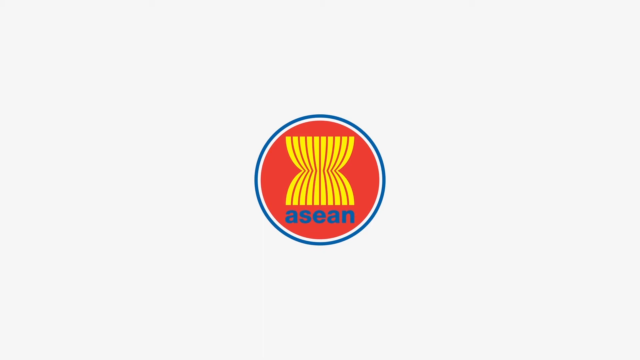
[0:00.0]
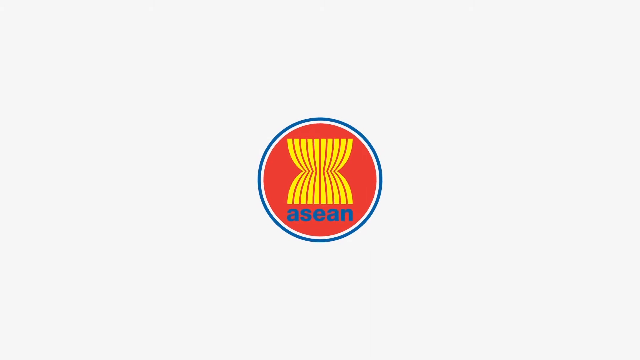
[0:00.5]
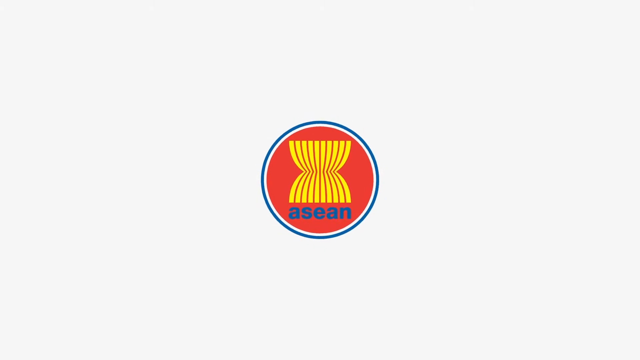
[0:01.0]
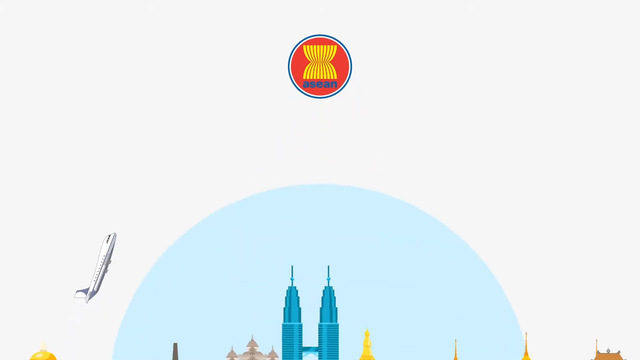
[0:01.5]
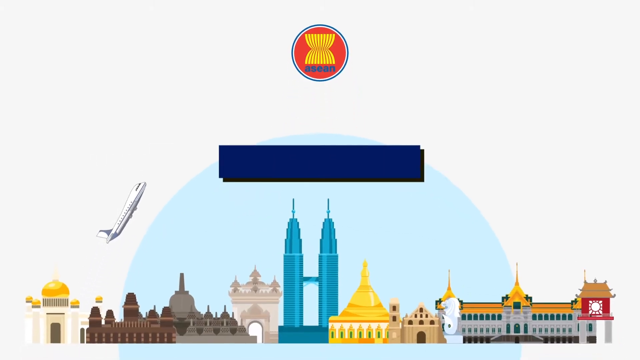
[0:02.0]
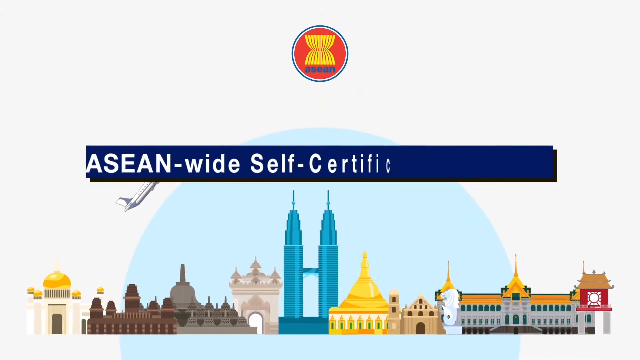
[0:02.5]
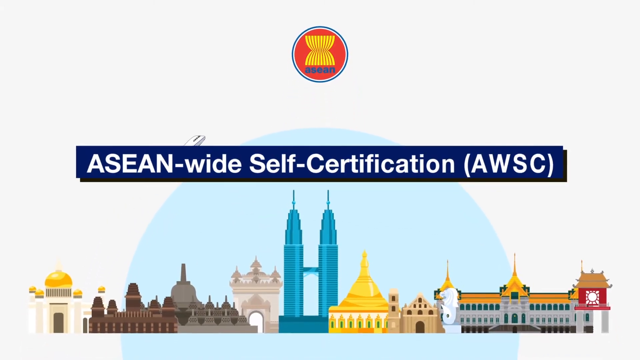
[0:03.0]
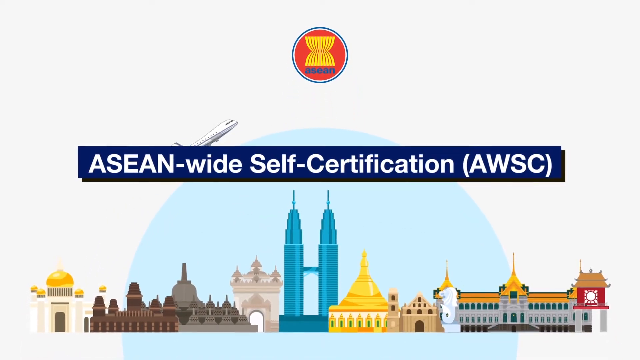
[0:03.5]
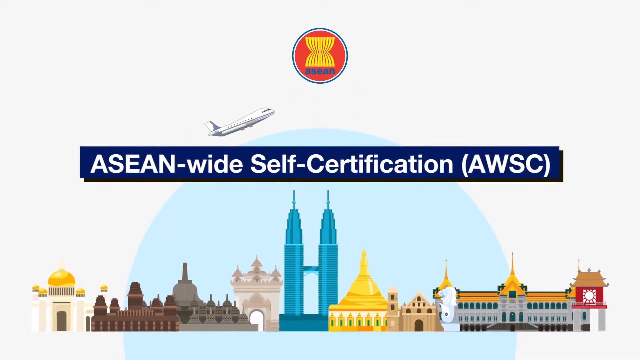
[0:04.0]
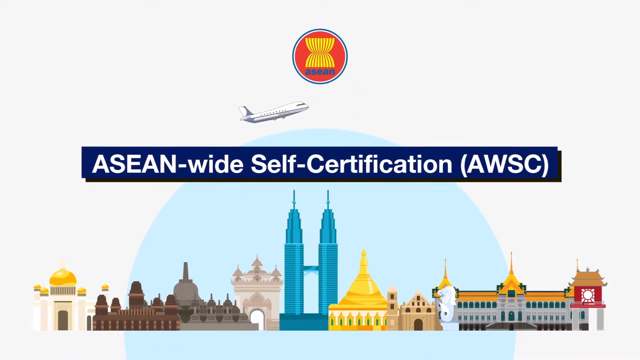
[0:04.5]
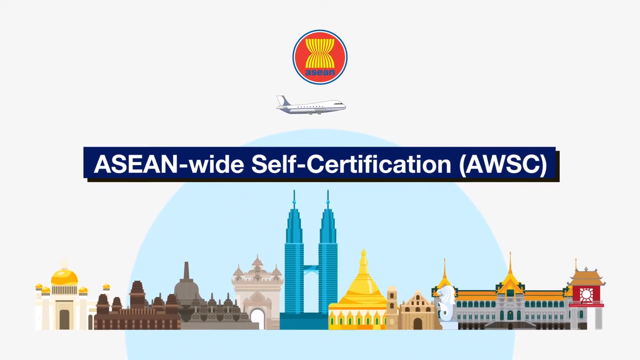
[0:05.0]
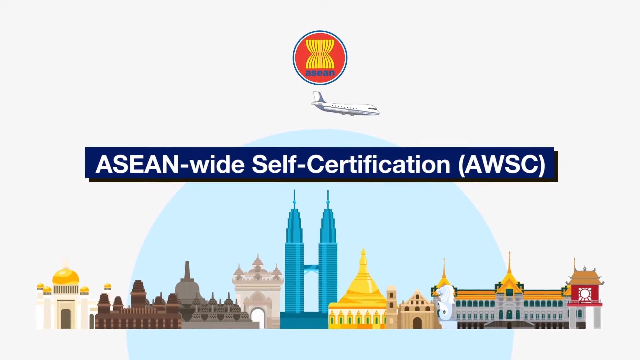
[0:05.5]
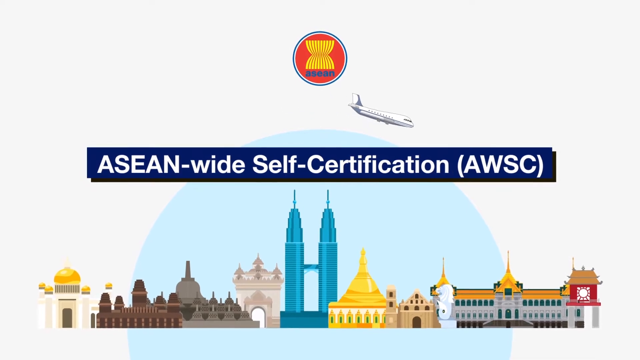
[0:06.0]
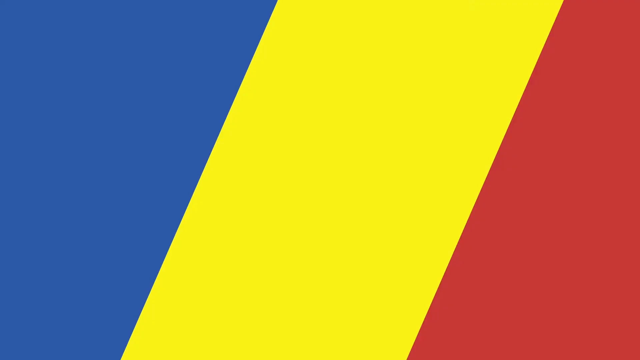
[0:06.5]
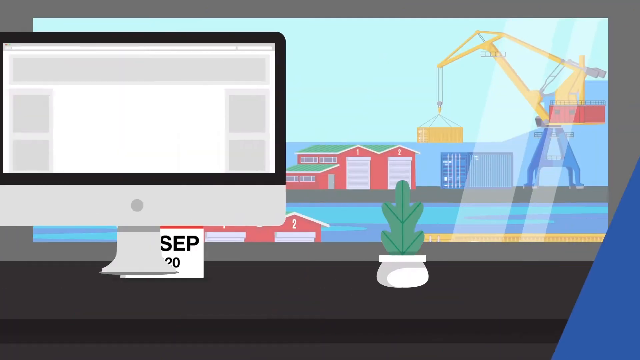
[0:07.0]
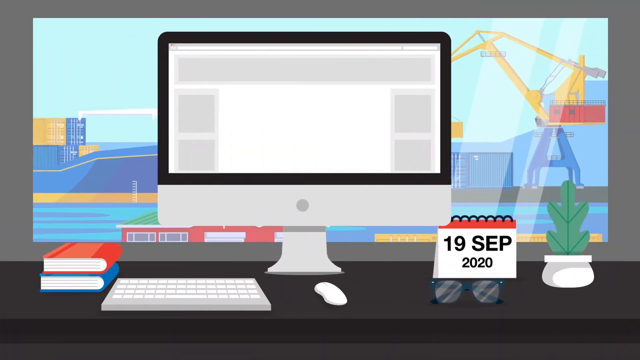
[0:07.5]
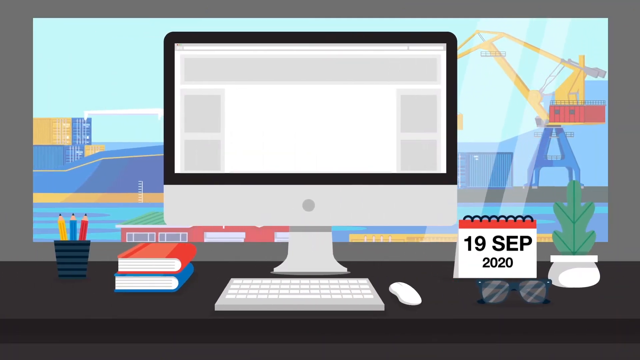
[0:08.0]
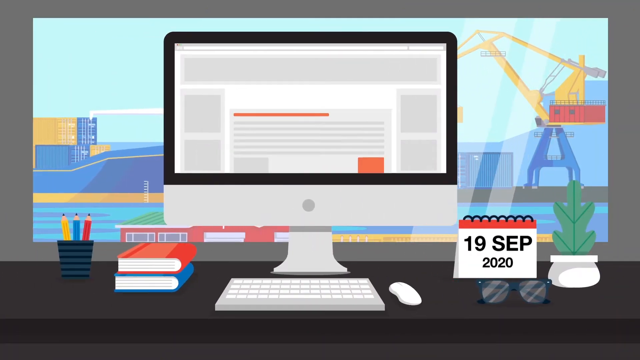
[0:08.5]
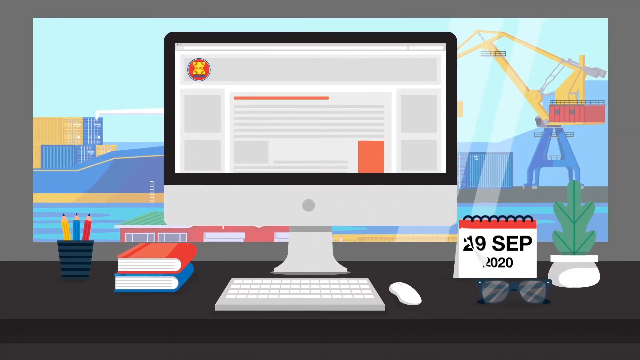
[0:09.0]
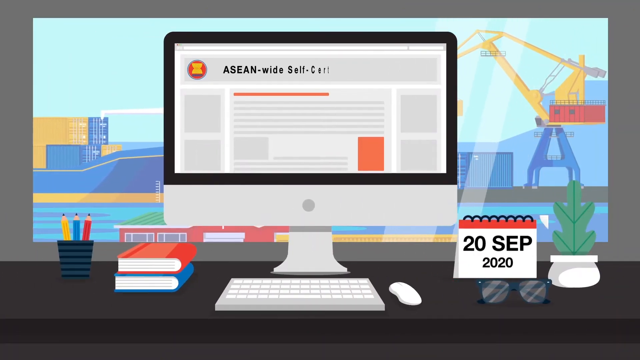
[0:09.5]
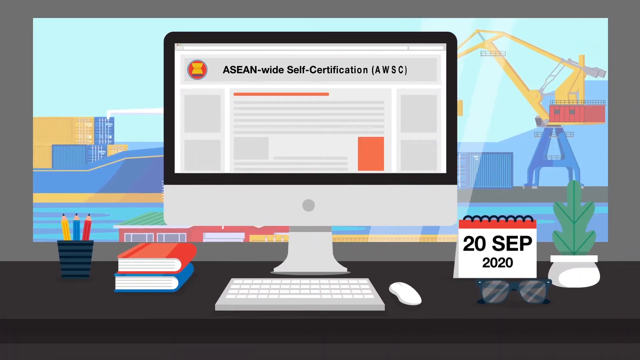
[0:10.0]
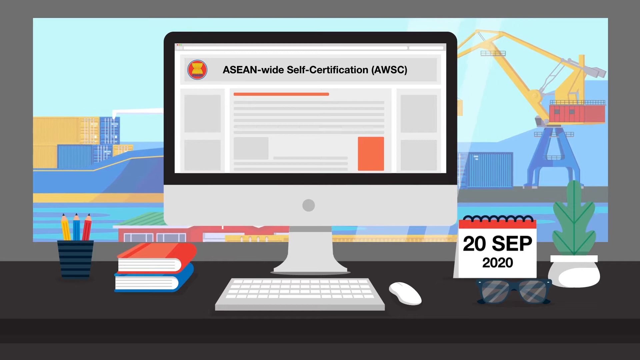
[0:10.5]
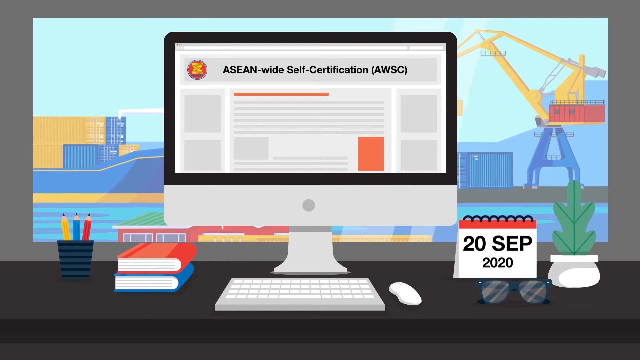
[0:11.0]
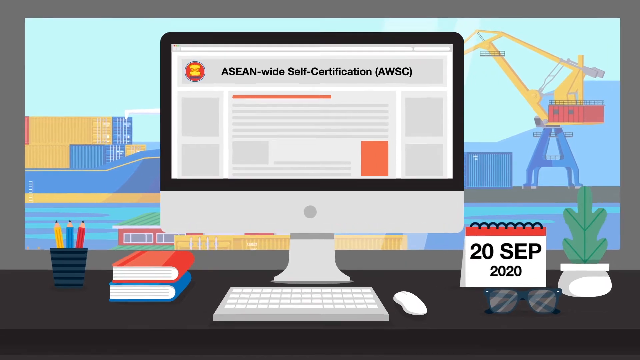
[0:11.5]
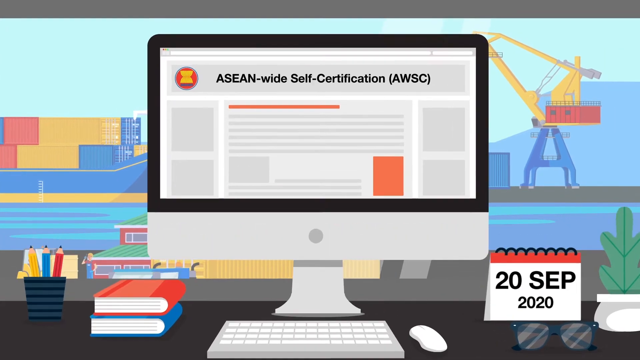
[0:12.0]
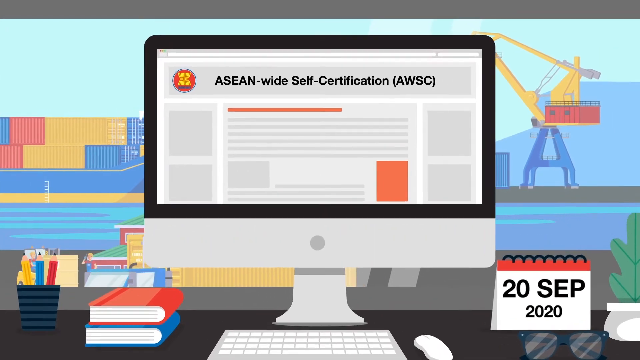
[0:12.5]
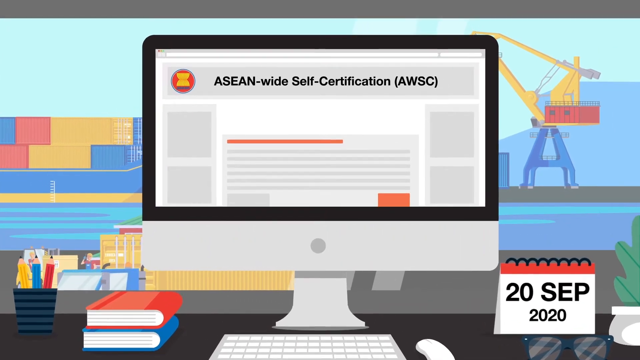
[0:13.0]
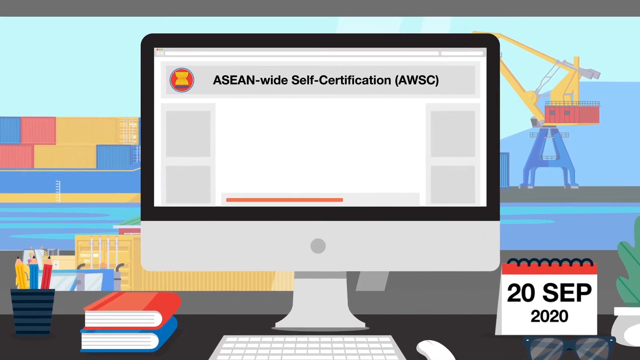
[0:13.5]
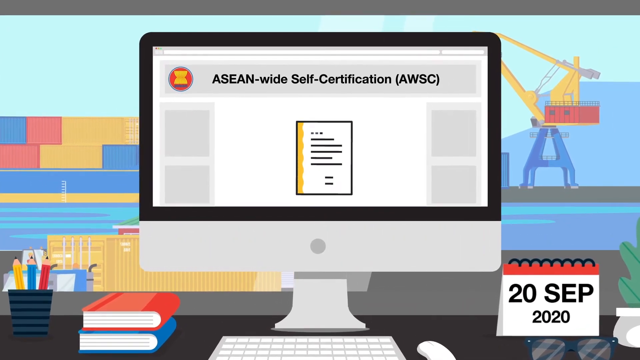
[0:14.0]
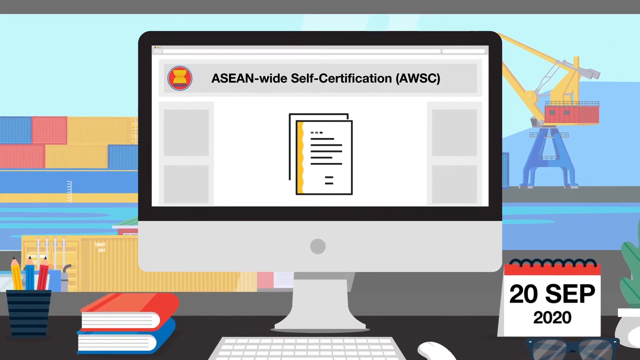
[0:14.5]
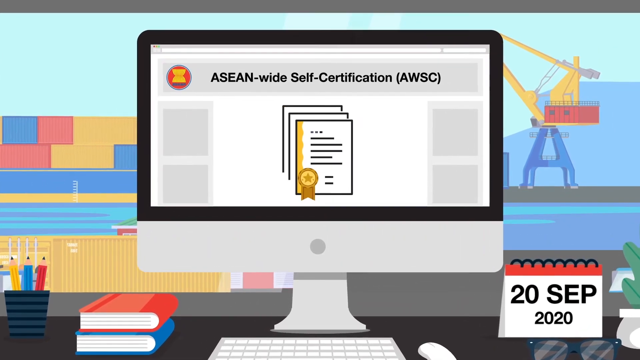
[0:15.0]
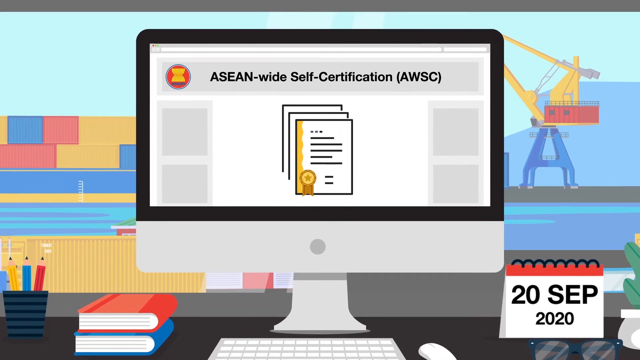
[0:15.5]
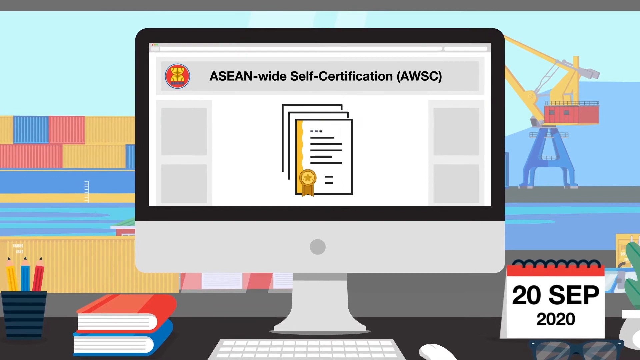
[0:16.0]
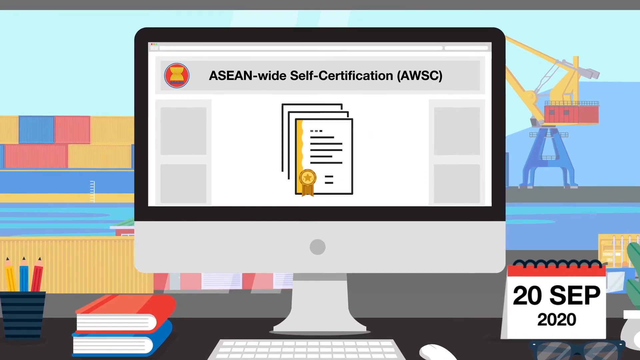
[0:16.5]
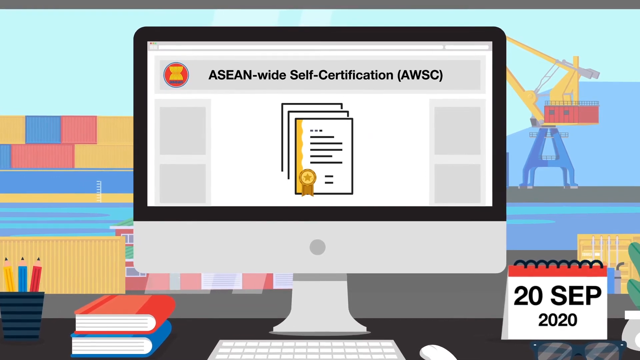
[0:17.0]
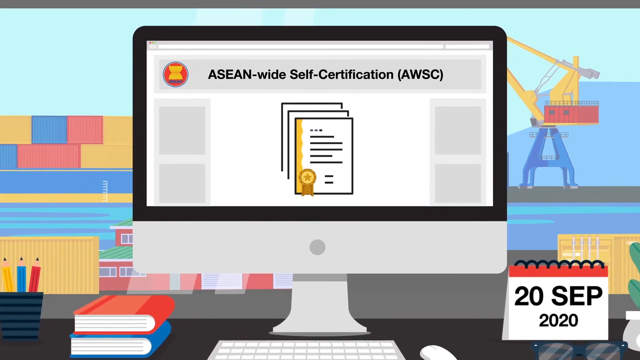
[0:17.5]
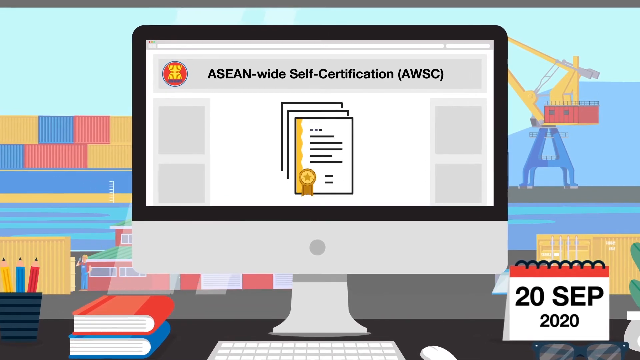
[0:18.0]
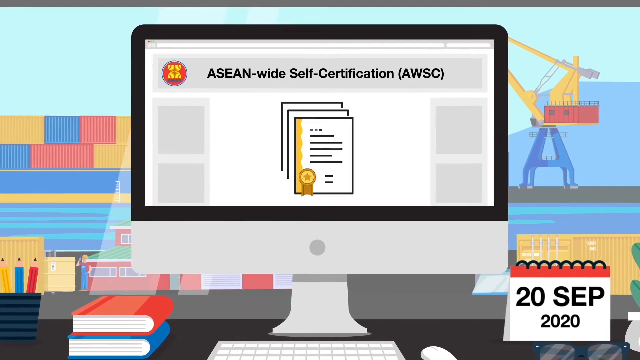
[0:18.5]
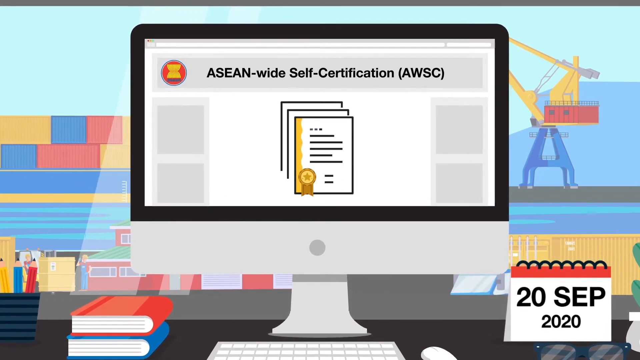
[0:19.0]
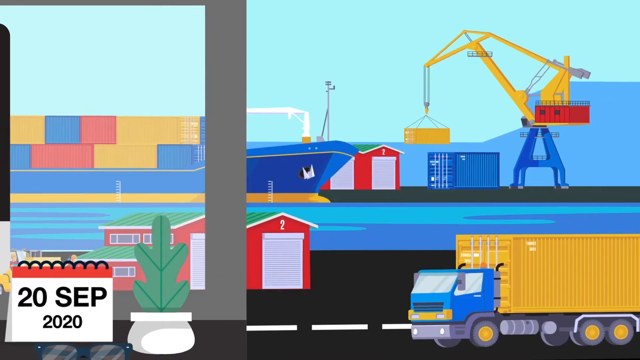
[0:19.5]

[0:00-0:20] The logo of a channel, company or group called ASEAN appears: a blue circle with a red circle inside and a very strange symbol made of yellow lines. A city then appears below it, with several famous buildings from different countries, such as India, the United States, Russia and China, among others. Text in the center reads "ASEAN Wide Self-Certification, AWSC". The video then continues as a 2D animation showing a Macintosh computer on a desk, with a calendar on the right that reads "September 19, 2020". In the background there is a window through which boats can be seen, including a huge blue boat with a few containers ready to be sent.